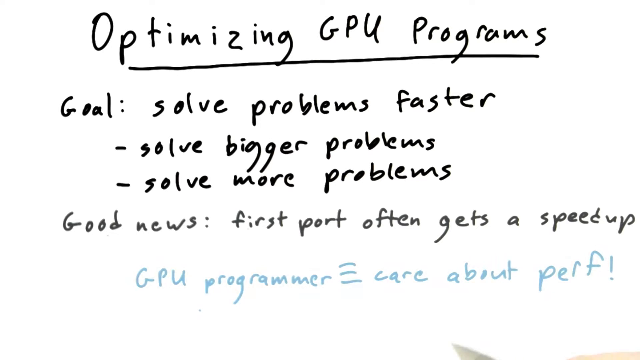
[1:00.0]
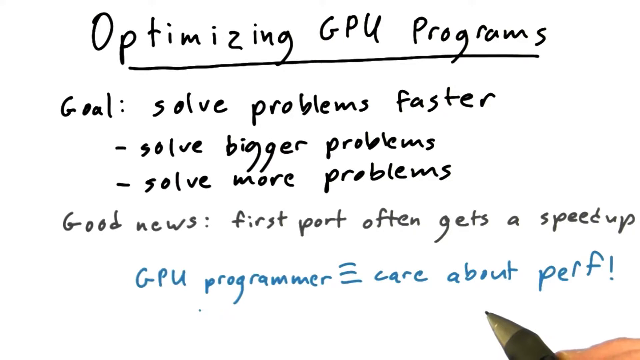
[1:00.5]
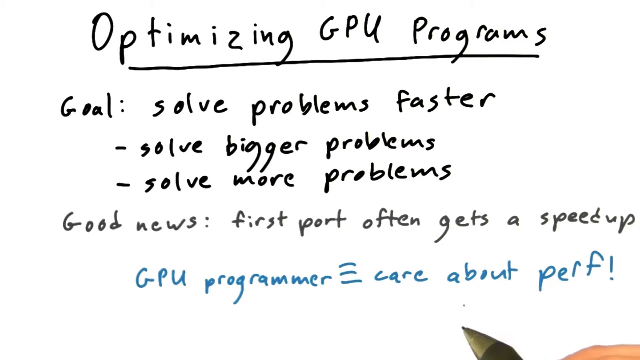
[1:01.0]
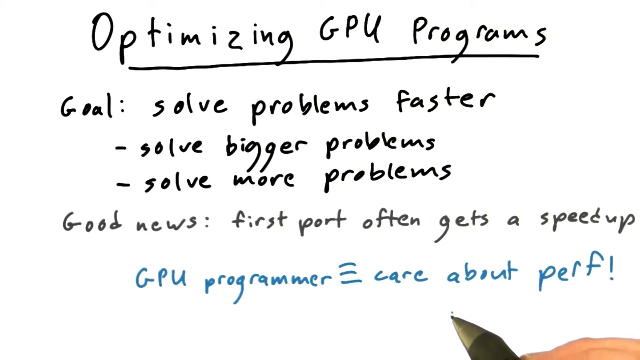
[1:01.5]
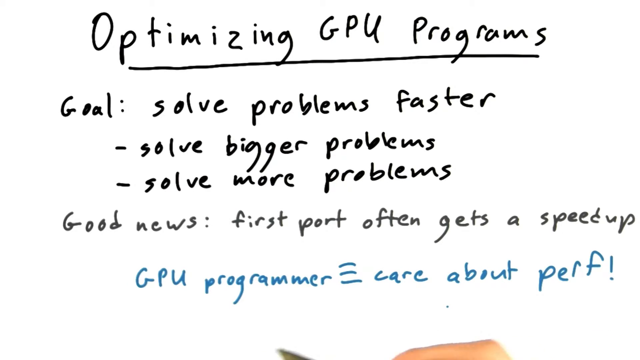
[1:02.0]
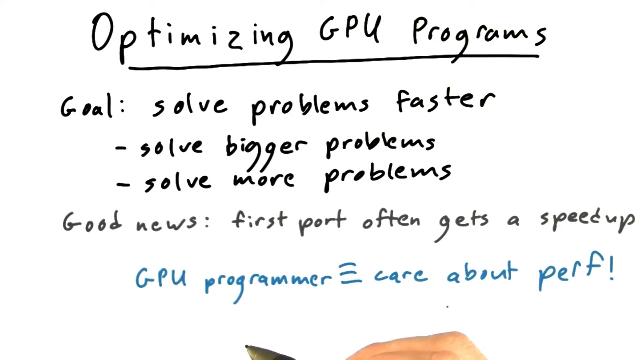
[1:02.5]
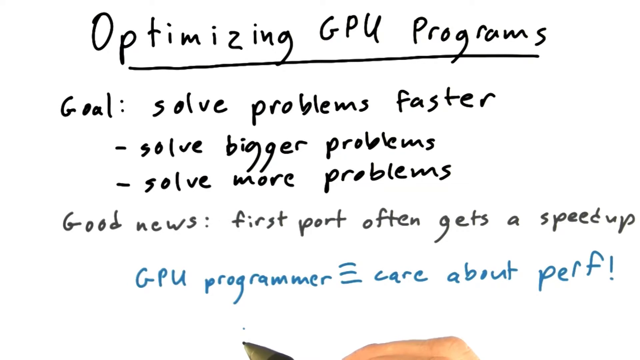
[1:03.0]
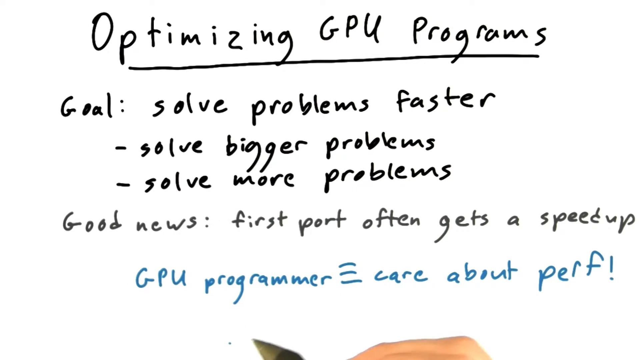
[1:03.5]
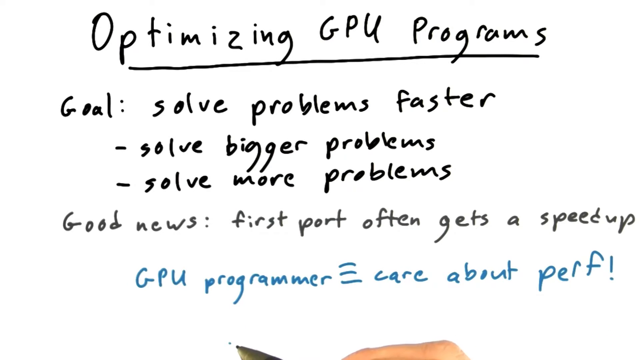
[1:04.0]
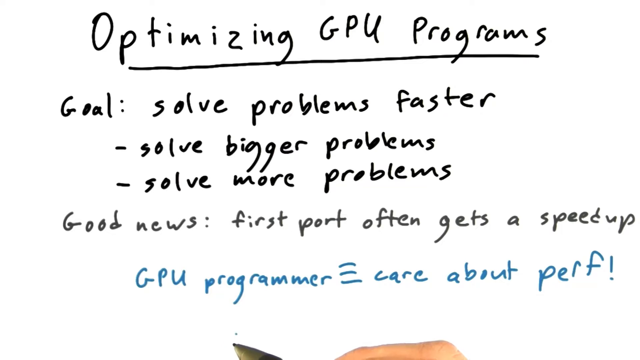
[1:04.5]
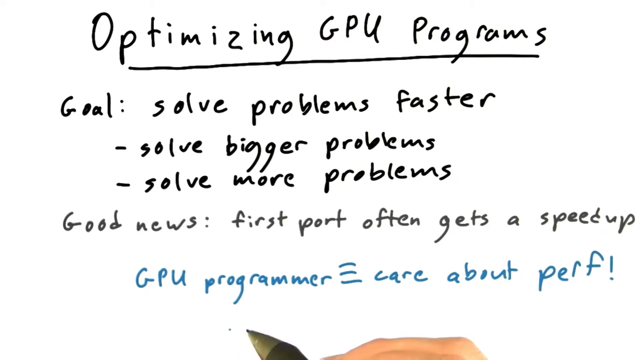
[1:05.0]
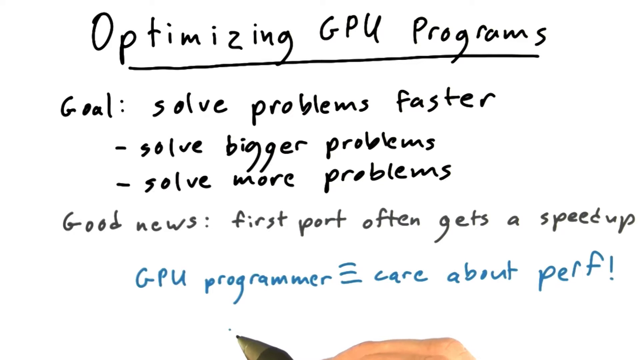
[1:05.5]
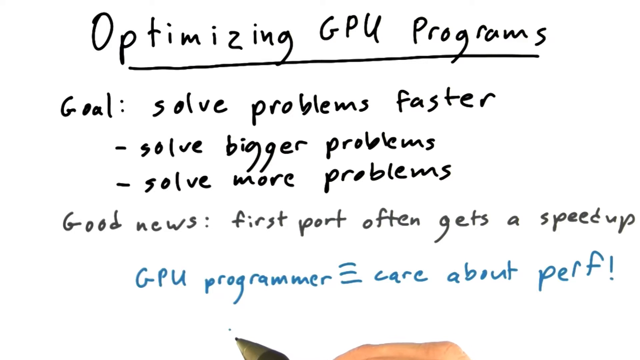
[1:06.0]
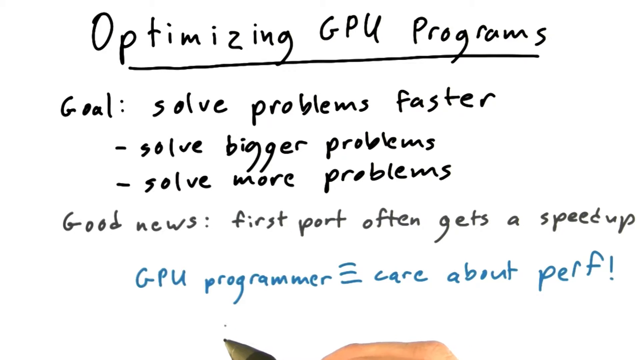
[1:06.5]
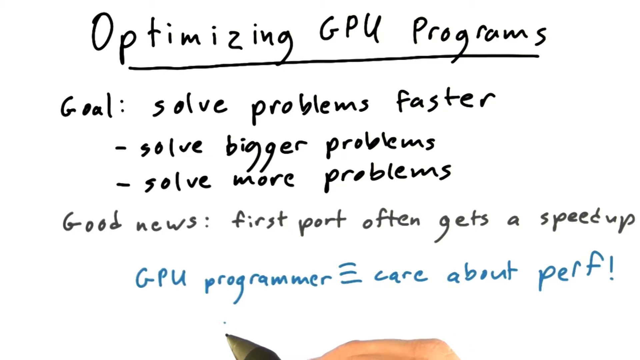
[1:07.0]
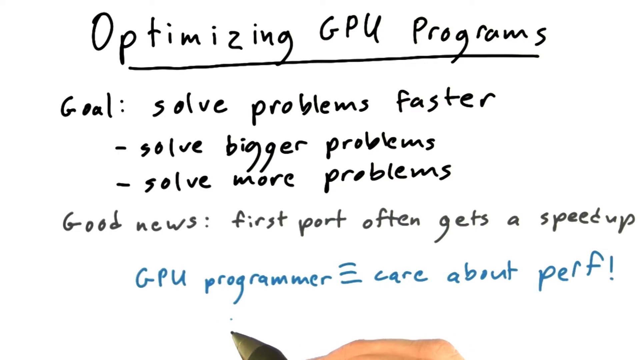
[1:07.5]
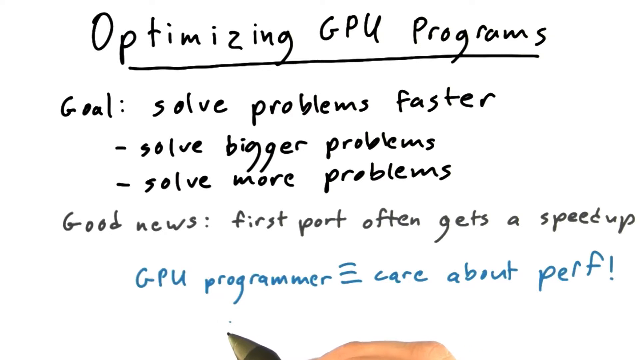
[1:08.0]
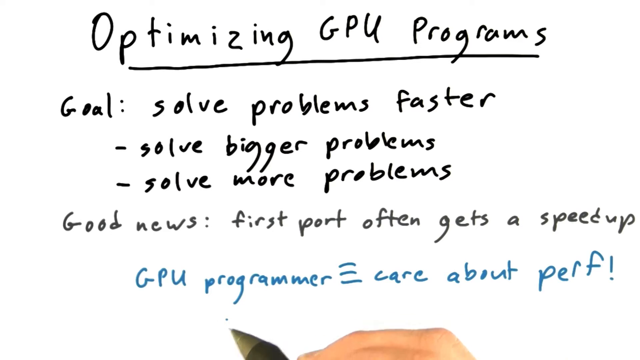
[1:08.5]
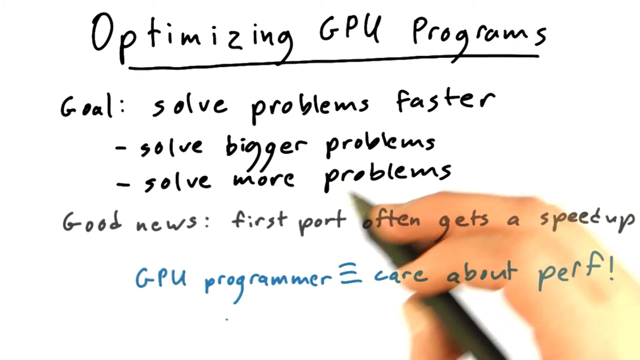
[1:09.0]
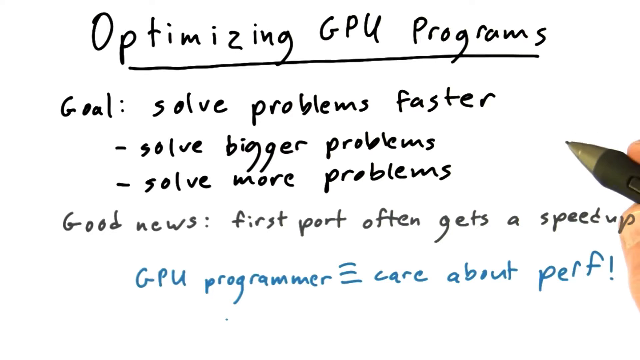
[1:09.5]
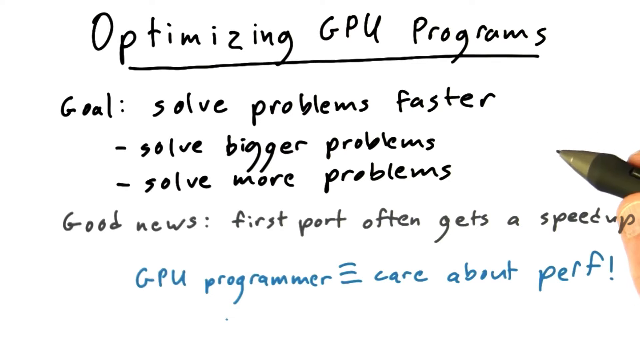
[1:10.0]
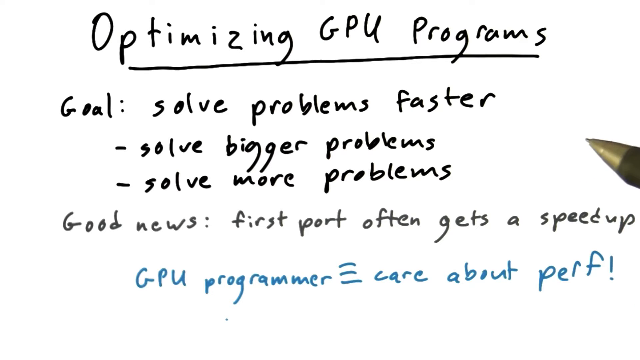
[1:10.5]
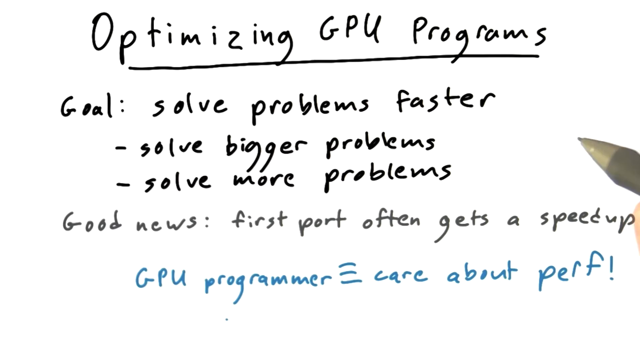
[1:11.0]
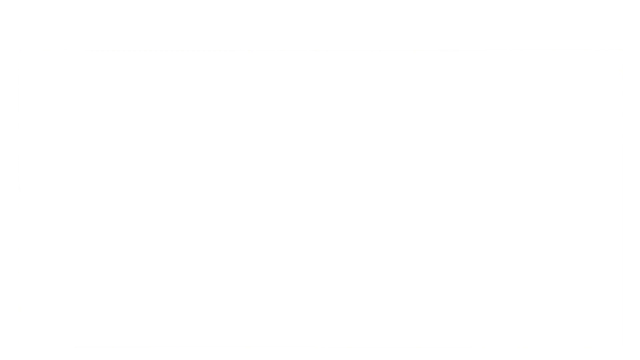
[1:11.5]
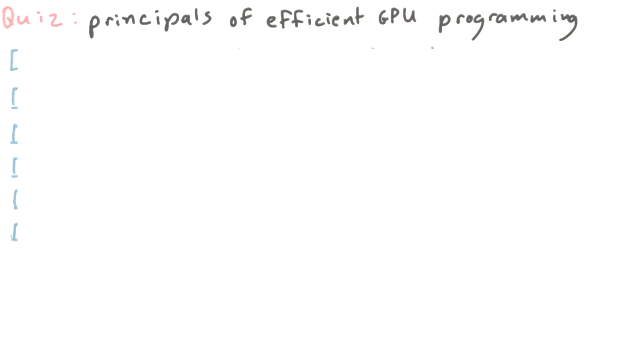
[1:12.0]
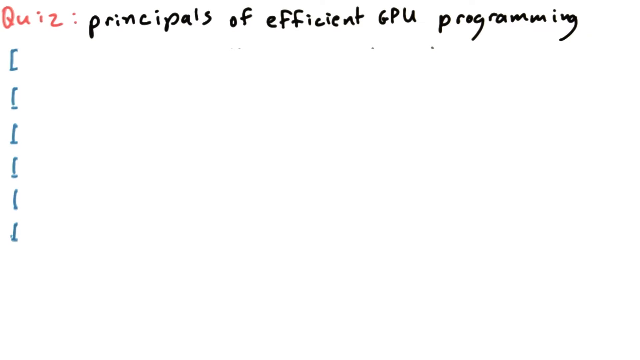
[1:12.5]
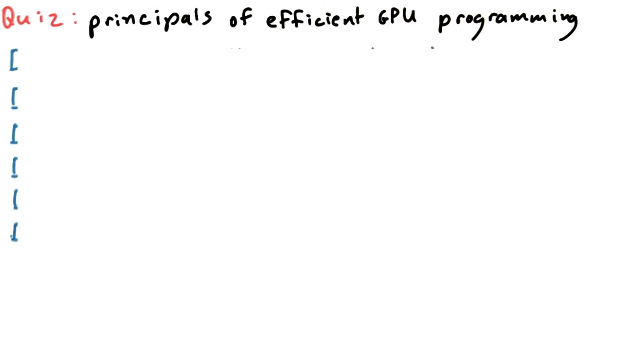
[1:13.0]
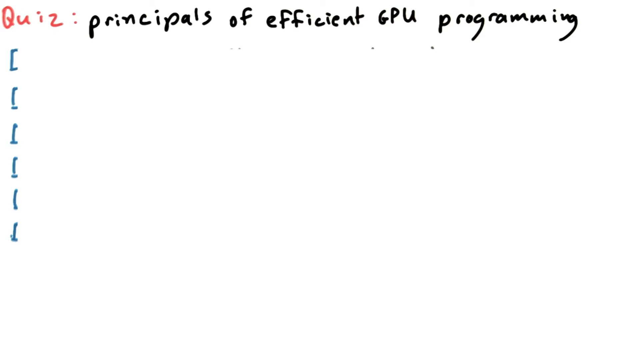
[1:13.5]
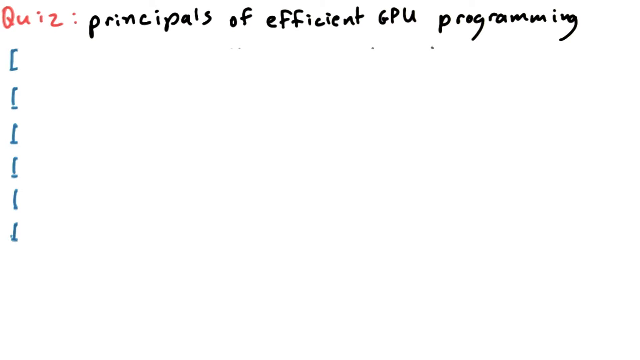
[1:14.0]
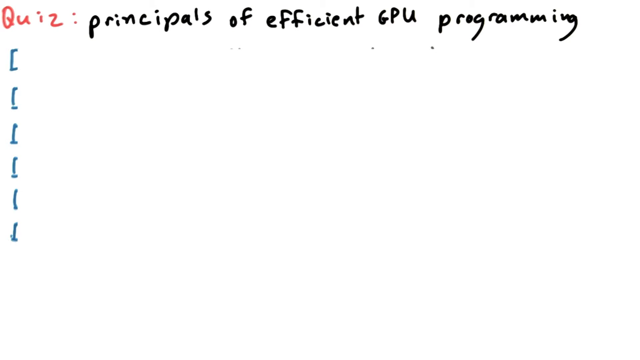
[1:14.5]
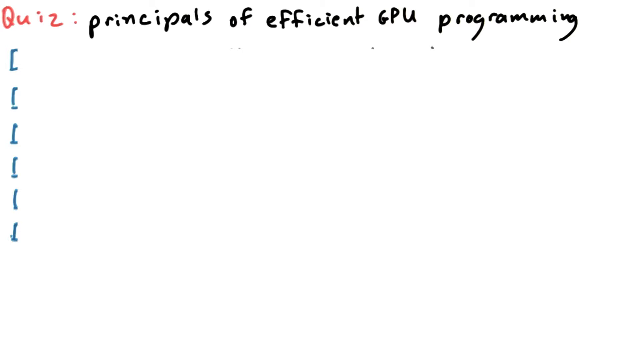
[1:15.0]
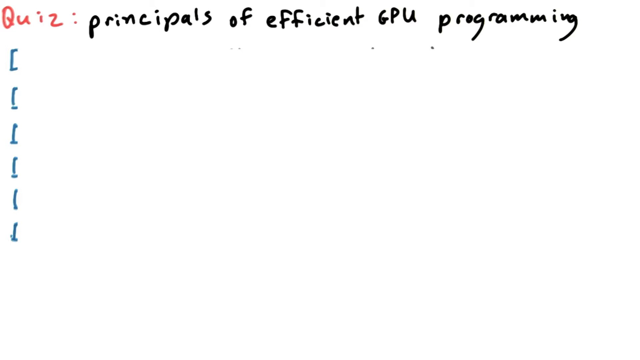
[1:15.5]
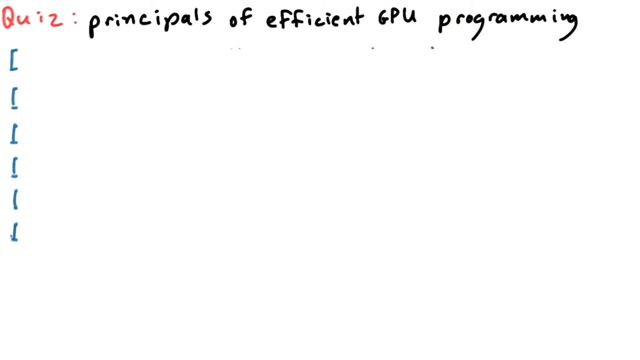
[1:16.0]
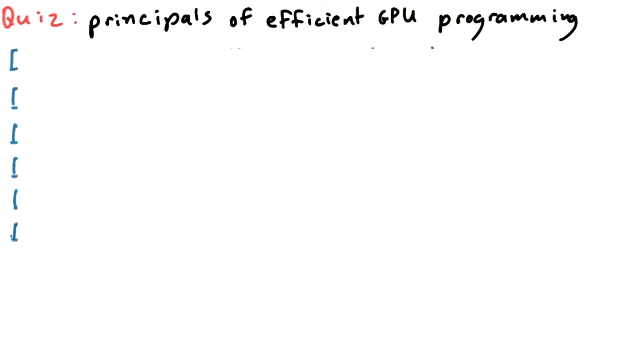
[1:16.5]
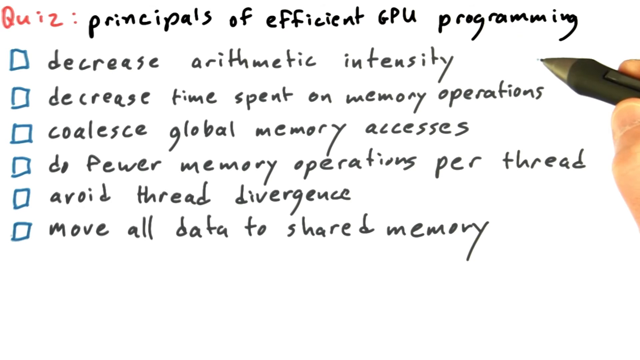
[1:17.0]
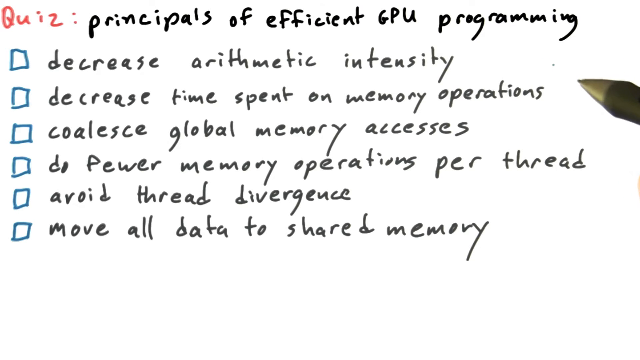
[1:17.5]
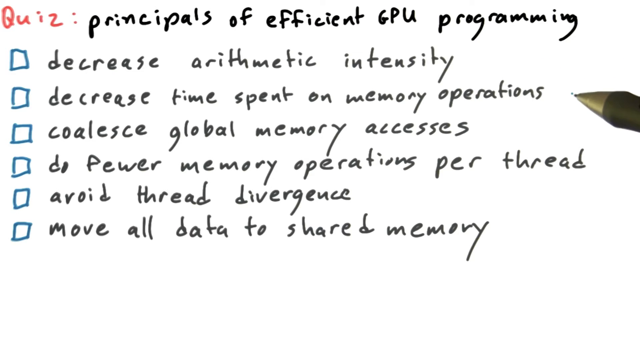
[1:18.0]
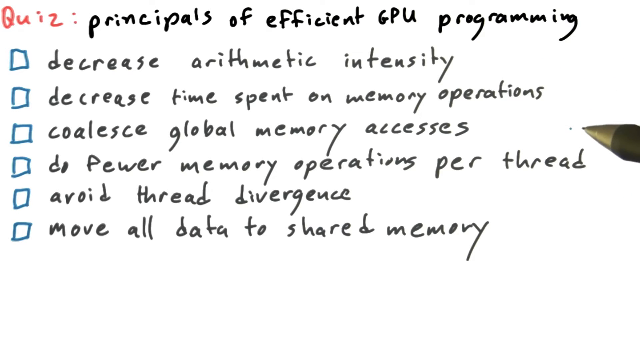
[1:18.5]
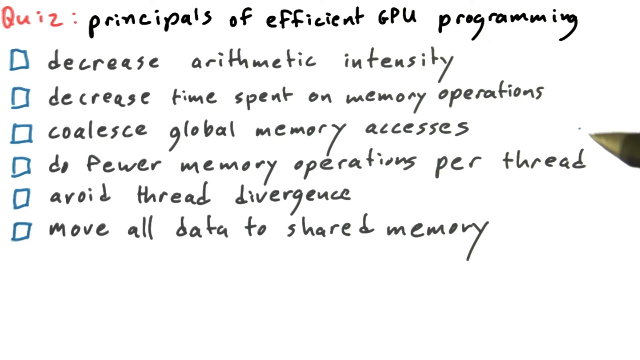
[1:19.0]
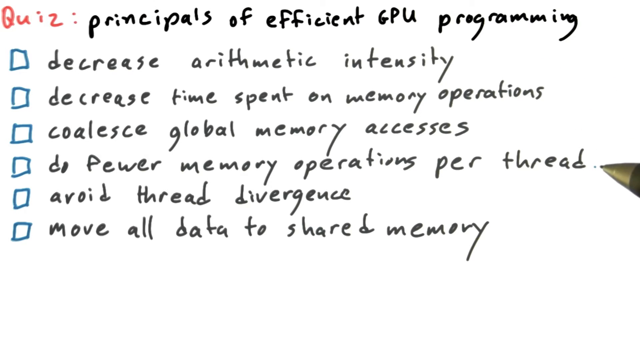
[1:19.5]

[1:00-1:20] The screen looks the same, with the five lines of words, but there is now a new line in a lighter font that reads "GPU programmer", followed by horizontal lines one under the other, and "care about Perth!". The font then changes to blue, and the pen reappears with only its tip showing in the bottom right-hand corner of the screen. The pen appears to be pushed up into the middle right-hand section of the screen, where a thumb and finger pinch the tip. The pen is wiggled around the area of the right-hand corner of the screen. A new page is then shown. A line of writing appears in the top left-hand corner in red, reading "quiz ..", and to its right, in black, "principles of efficient GPU programming".